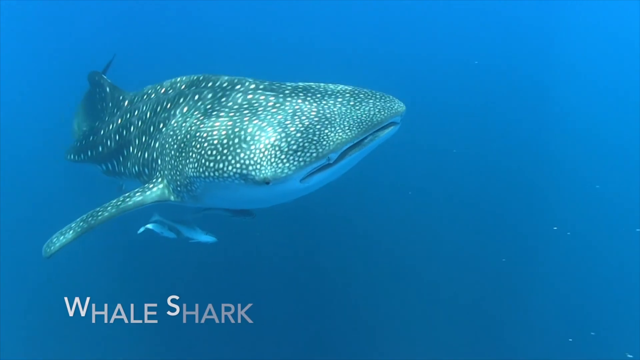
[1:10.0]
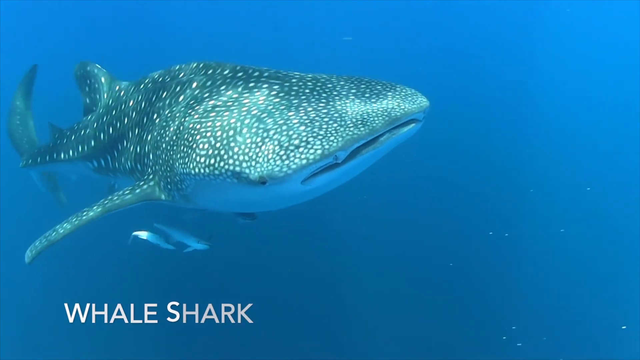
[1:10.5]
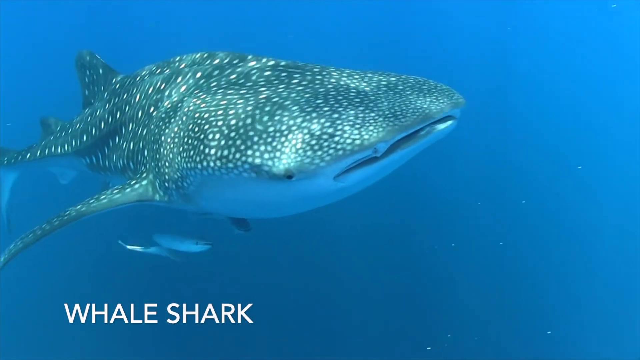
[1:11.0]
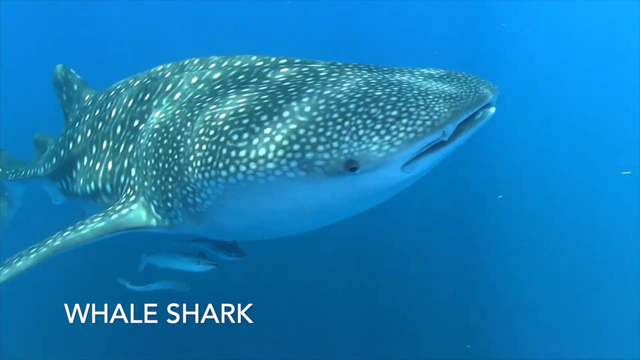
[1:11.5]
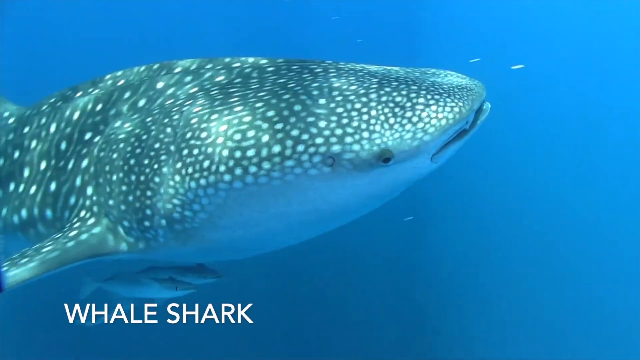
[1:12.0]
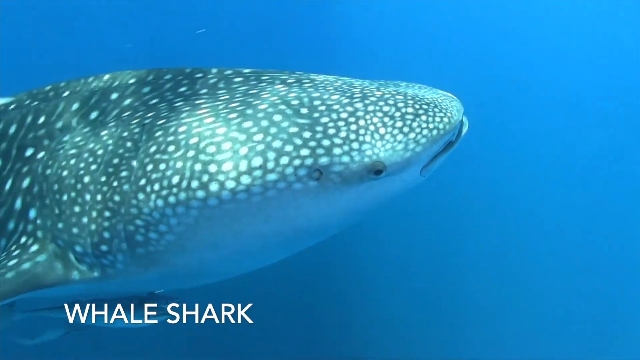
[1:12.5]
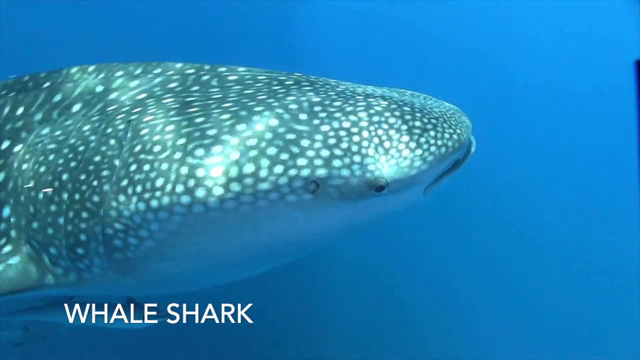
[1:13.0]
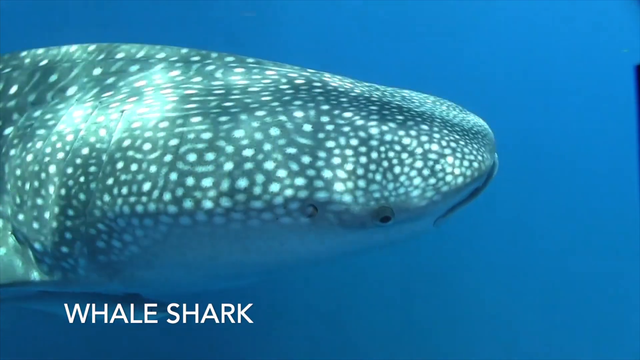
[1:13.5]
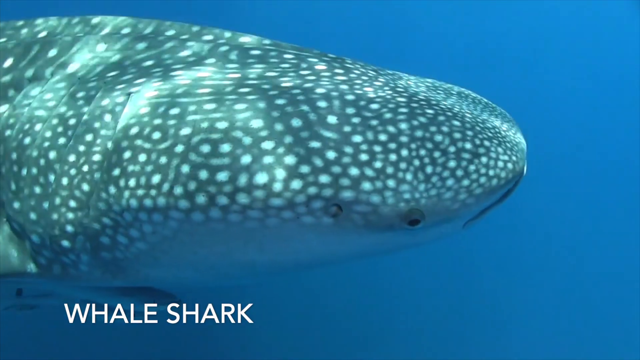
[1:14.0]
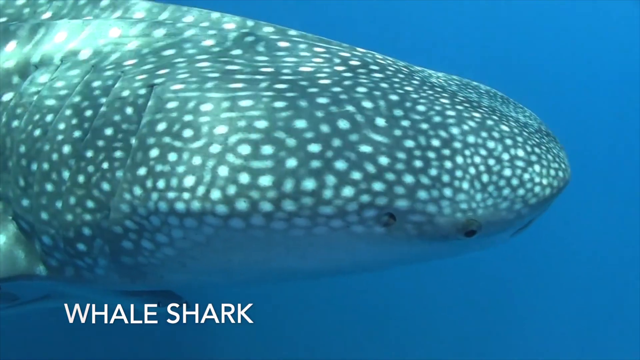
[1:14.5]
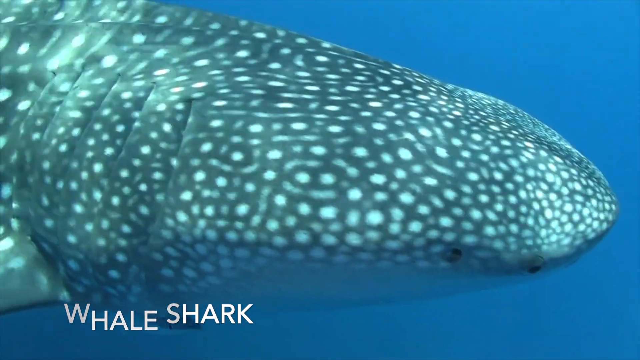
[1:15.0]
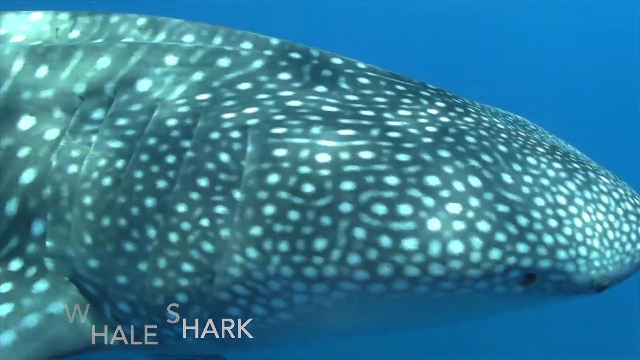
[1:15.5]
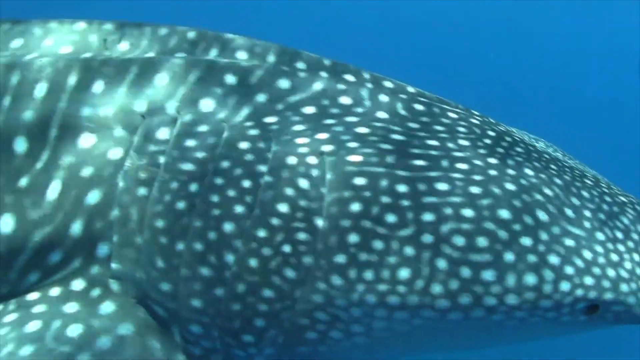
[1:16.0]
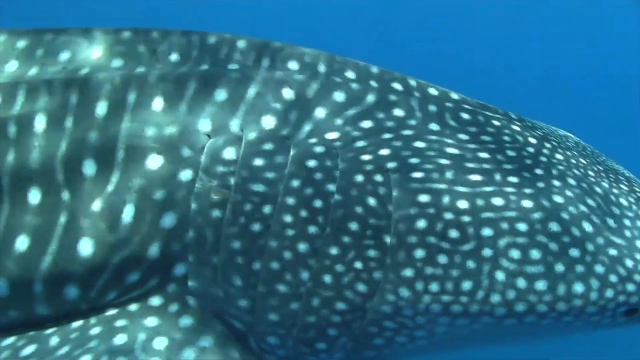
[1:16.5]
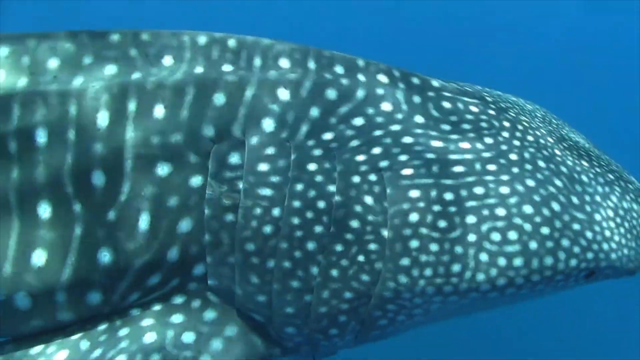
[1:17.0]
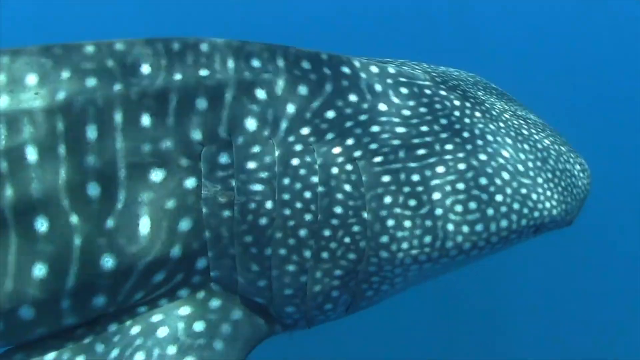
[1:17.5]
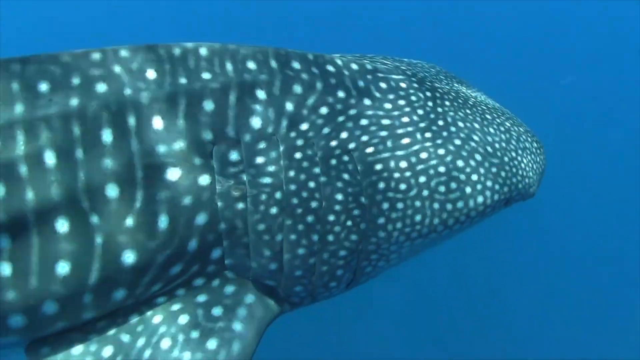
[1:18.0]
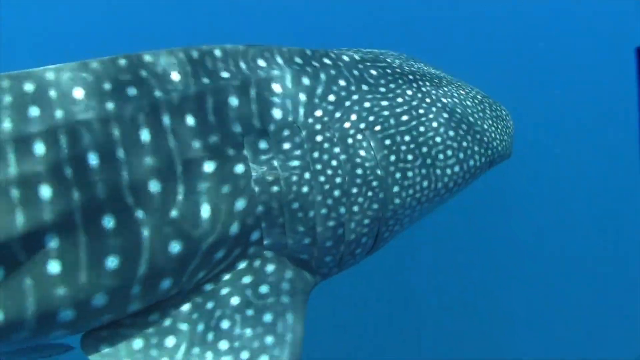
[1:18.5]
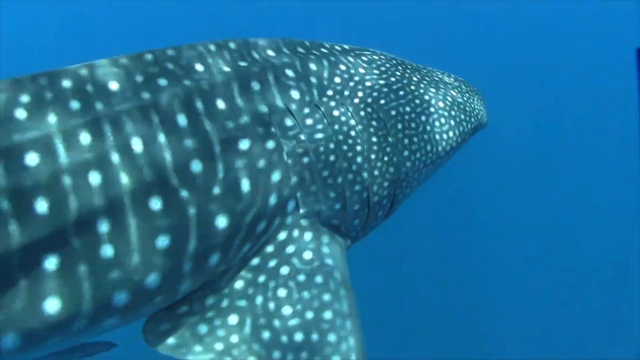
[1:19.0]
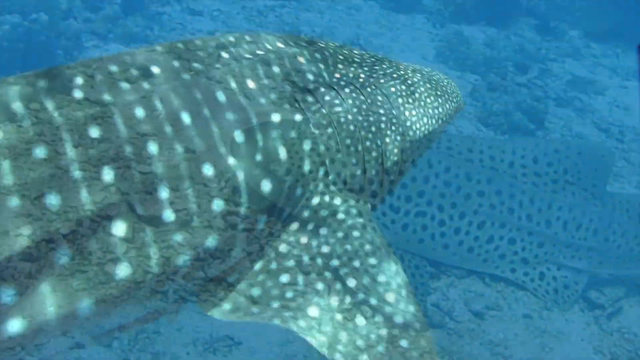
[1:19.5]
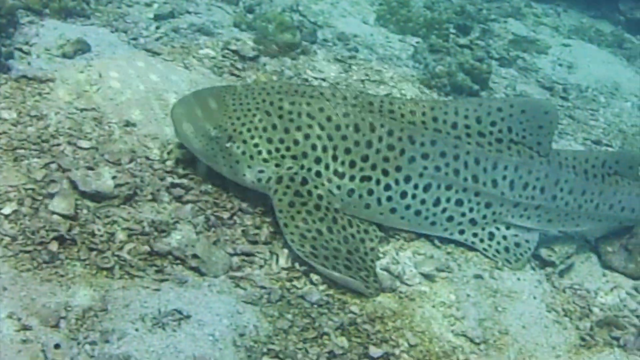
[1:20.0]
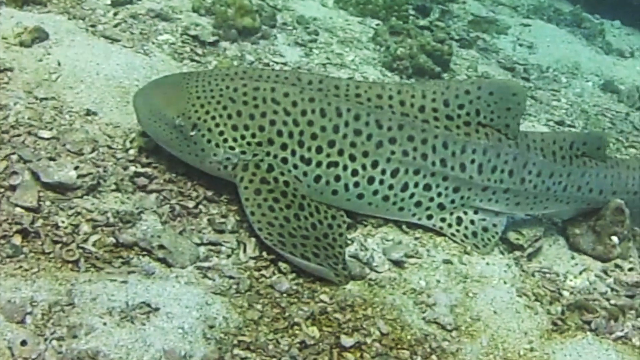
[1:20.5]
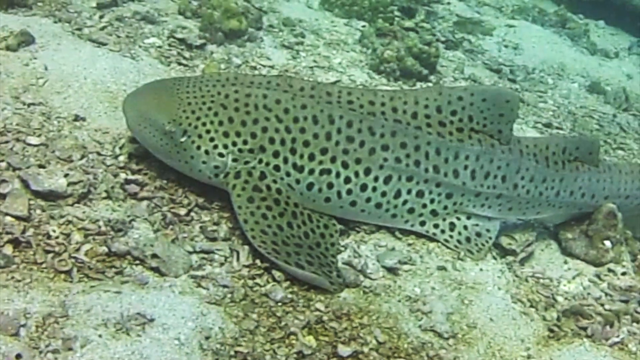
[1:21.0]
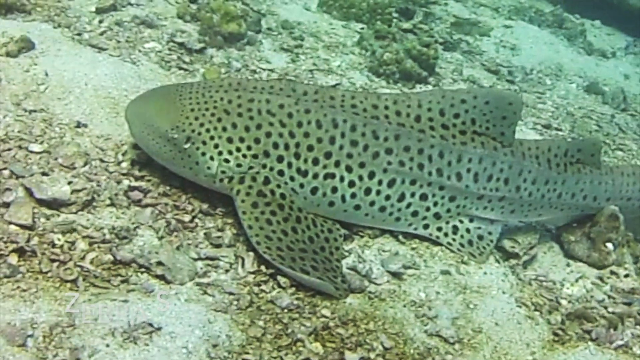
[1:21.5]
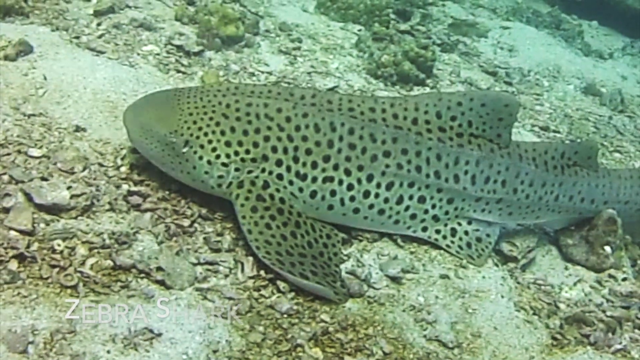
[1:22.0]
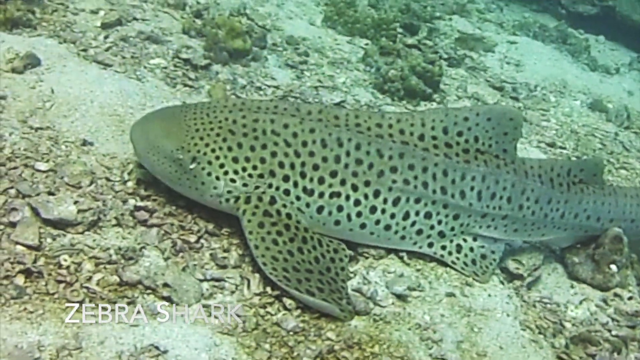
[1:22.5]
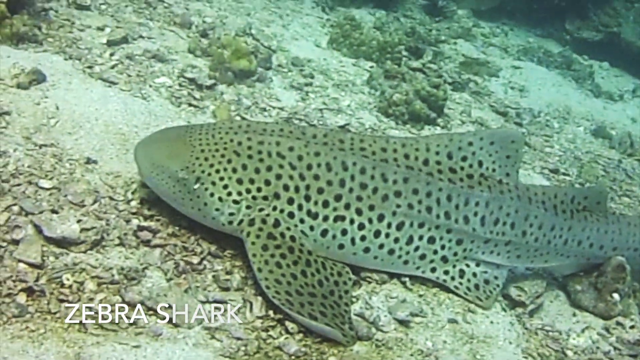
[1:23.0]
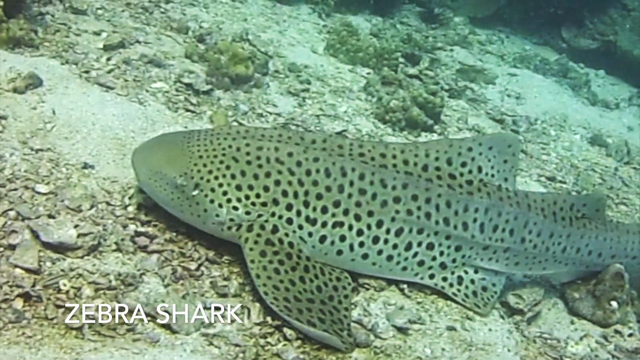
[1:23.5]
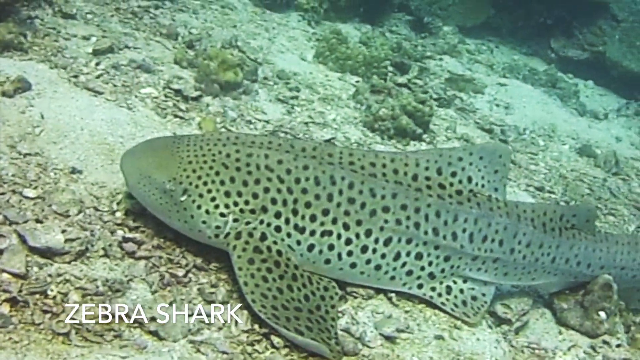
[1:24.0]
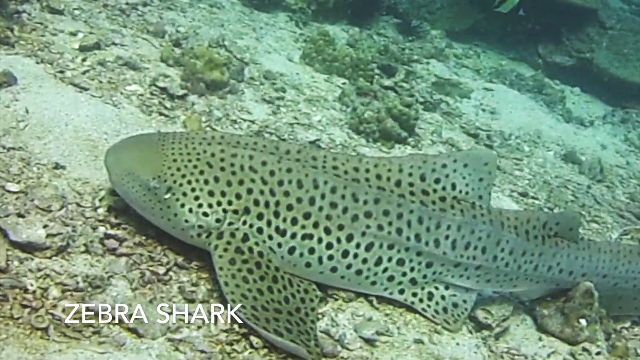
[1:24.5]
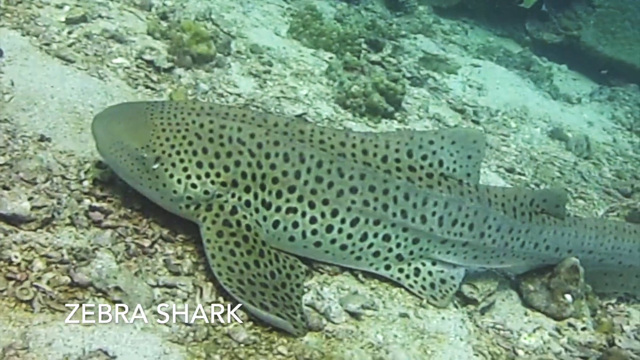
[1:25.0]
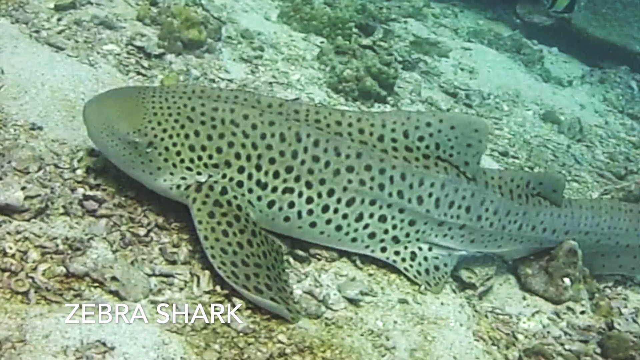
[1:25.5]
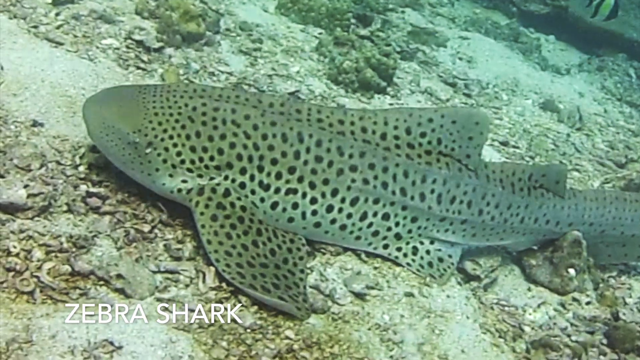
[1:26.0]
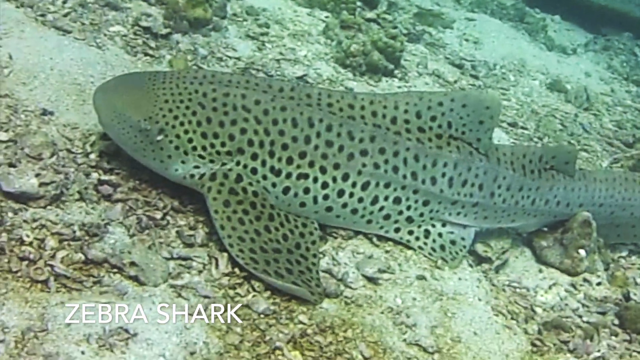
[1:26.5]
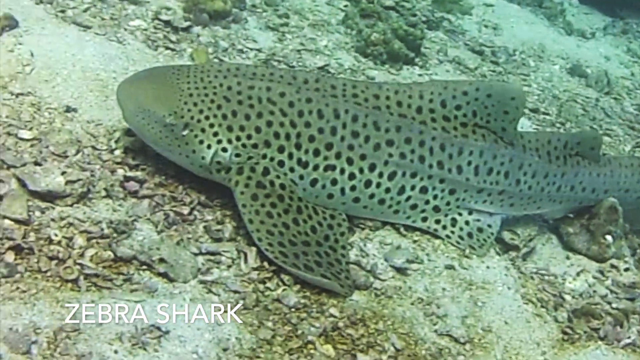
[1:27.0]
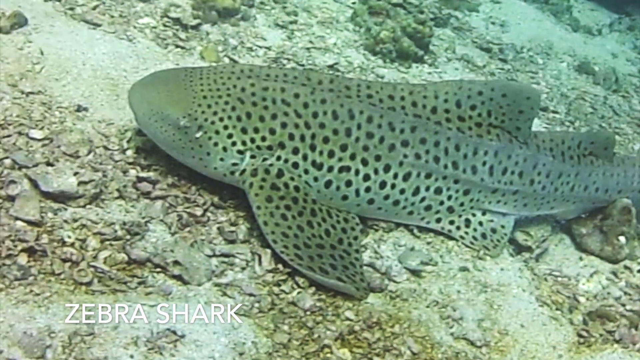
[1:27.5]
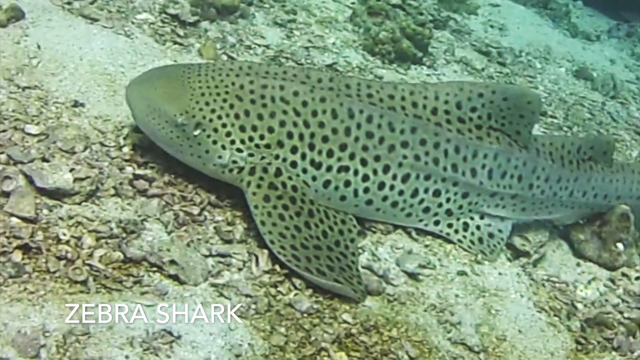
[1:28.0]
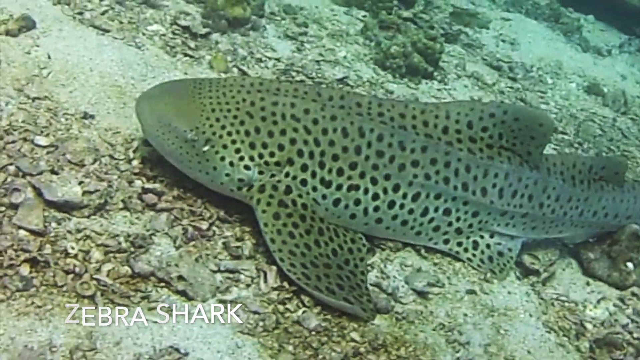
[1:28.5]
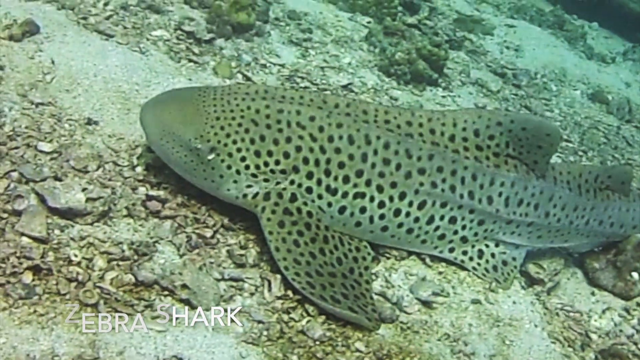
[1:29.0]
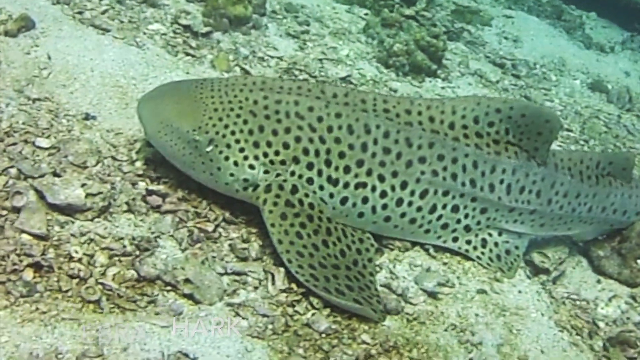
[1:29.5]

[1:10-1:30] A zebra shark lies at the bottom of the sea, breathing heavily. It is light brown, closer to beige, with black dots all over except on the nose. As it breathes, part of its neck folds in and out. The whale continues to swim through the water in circles.